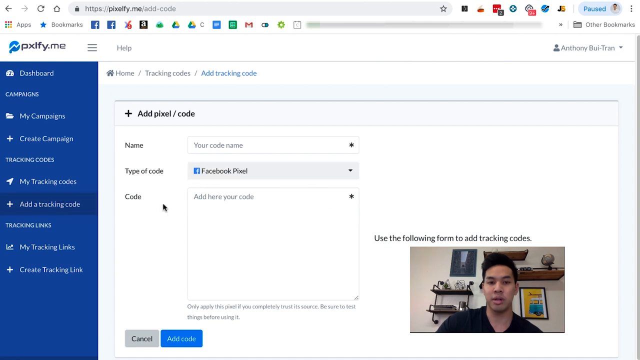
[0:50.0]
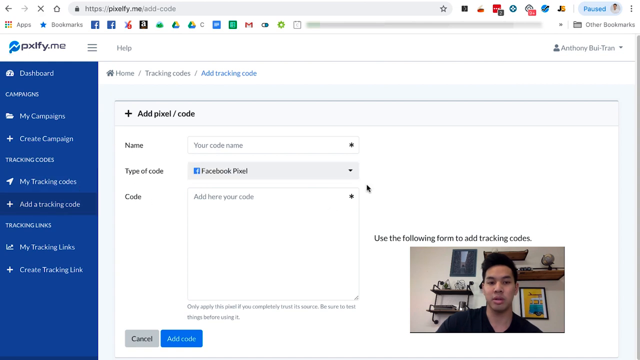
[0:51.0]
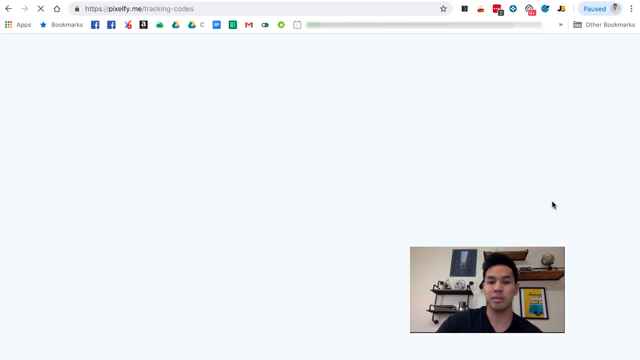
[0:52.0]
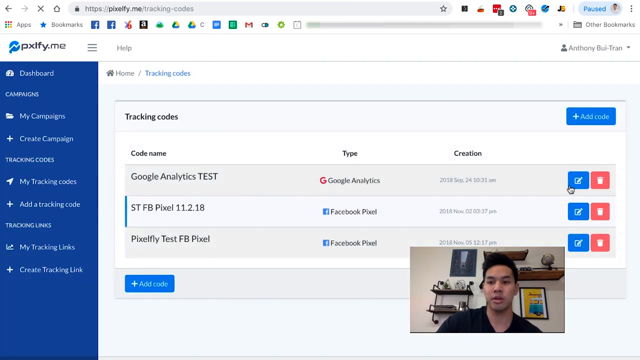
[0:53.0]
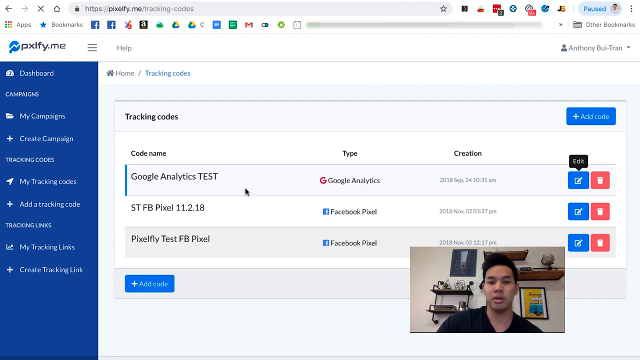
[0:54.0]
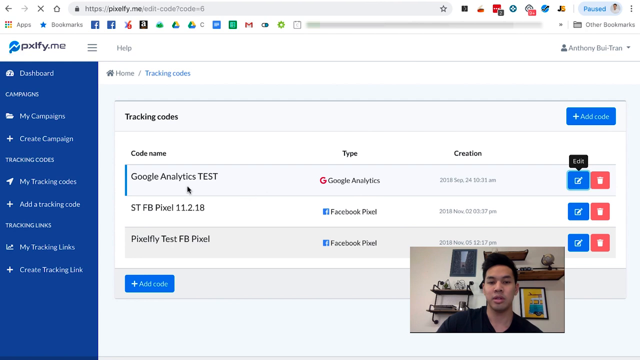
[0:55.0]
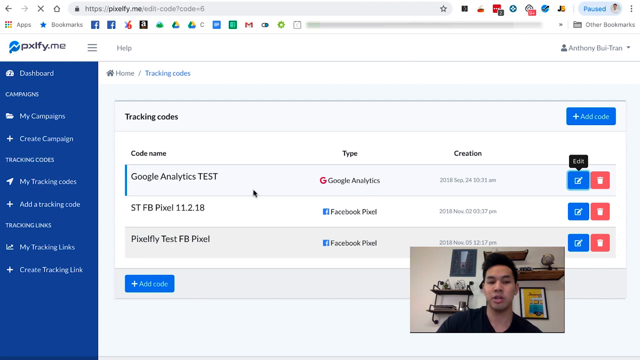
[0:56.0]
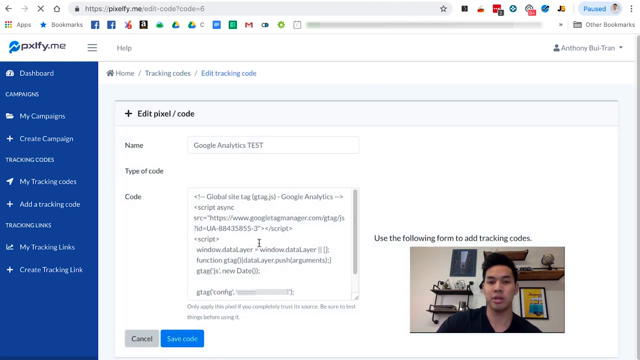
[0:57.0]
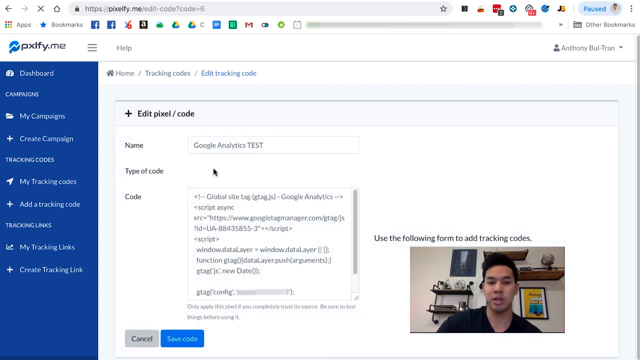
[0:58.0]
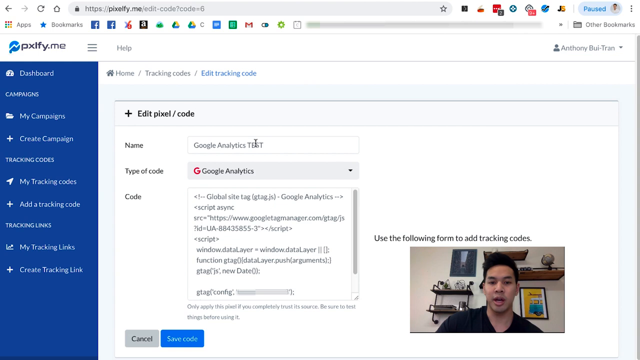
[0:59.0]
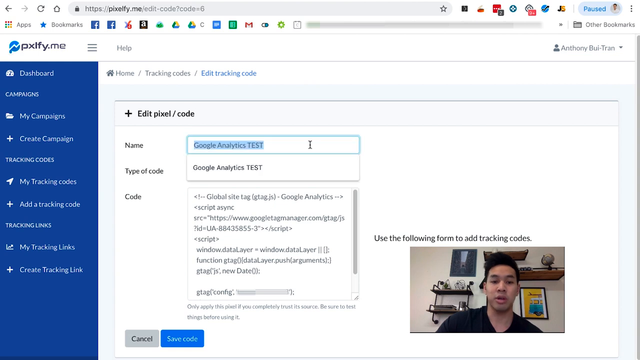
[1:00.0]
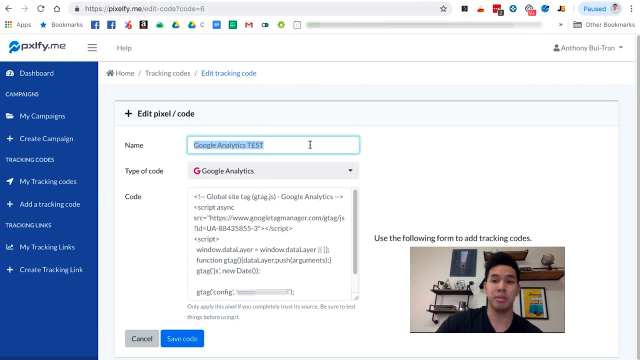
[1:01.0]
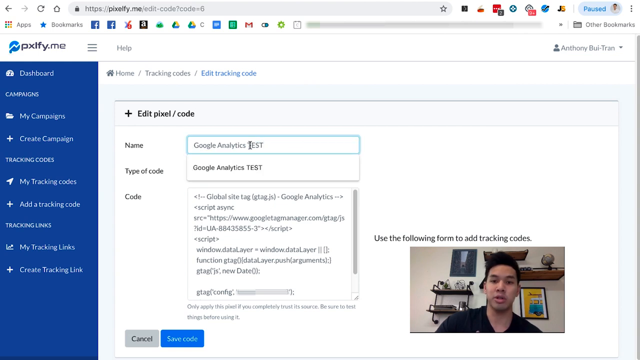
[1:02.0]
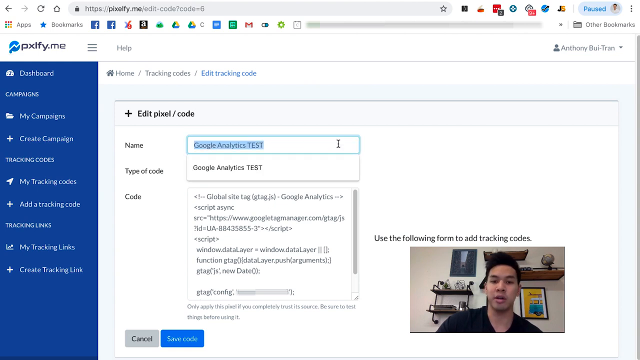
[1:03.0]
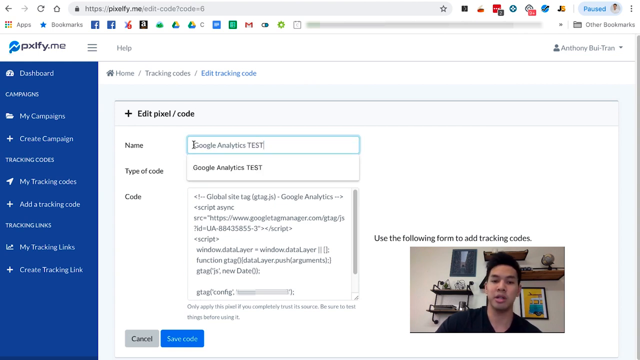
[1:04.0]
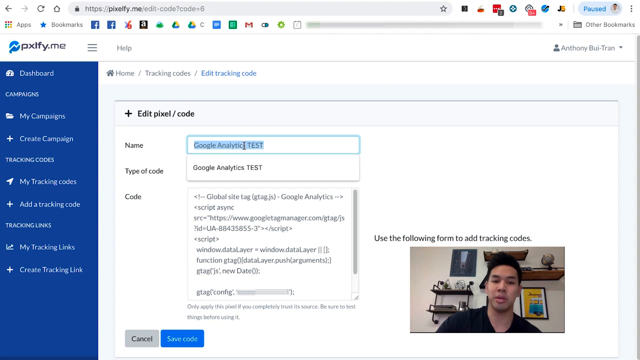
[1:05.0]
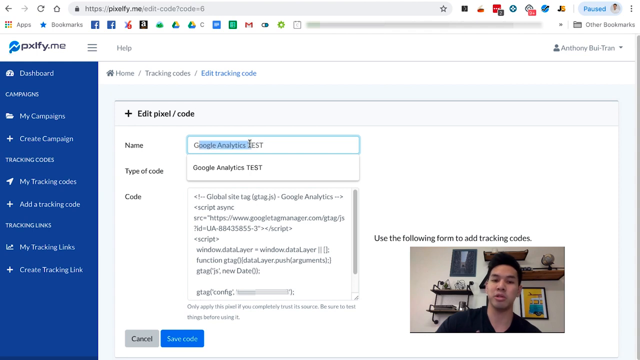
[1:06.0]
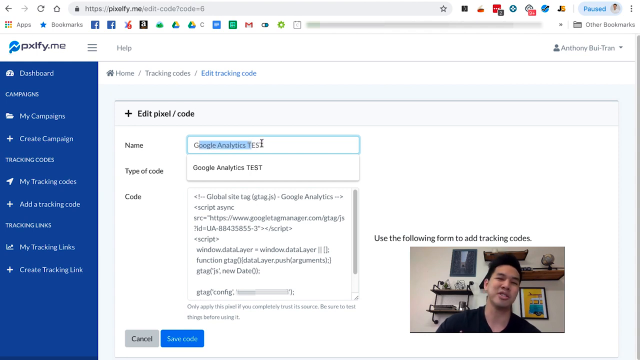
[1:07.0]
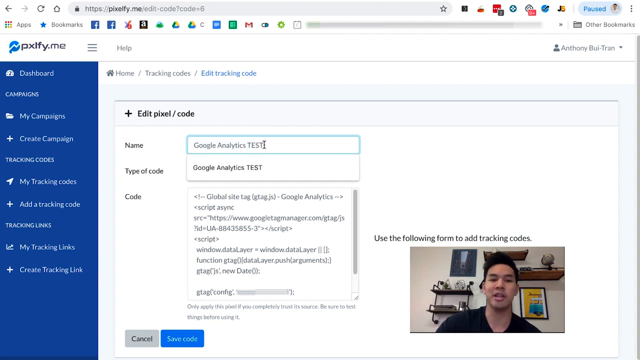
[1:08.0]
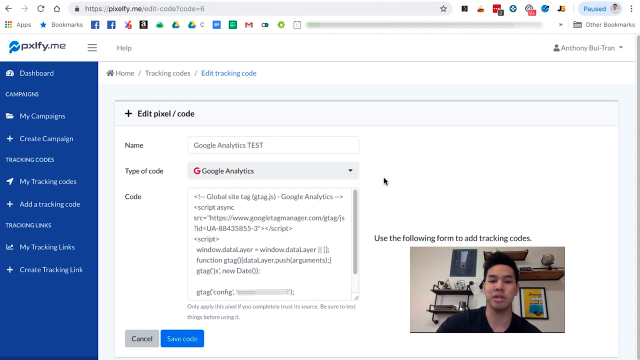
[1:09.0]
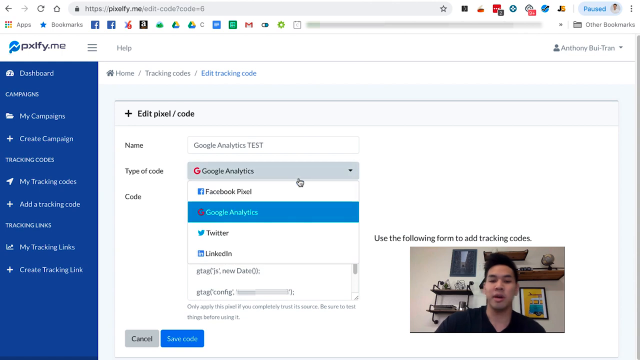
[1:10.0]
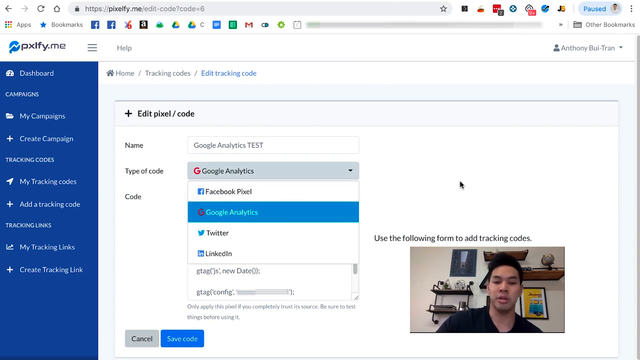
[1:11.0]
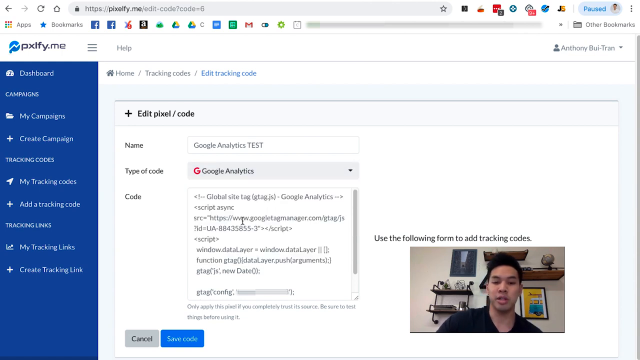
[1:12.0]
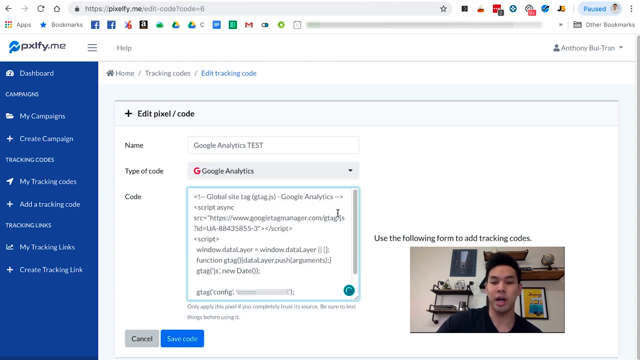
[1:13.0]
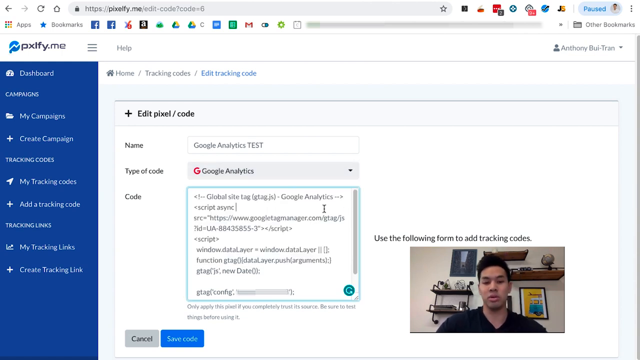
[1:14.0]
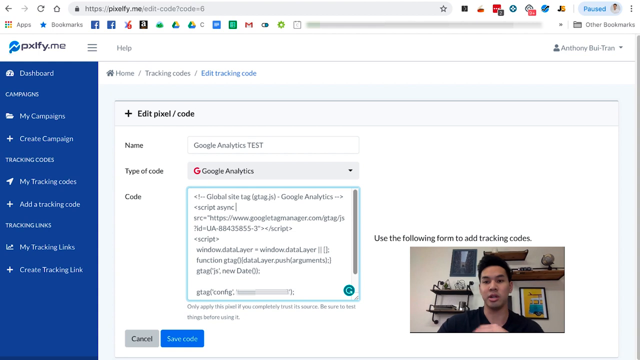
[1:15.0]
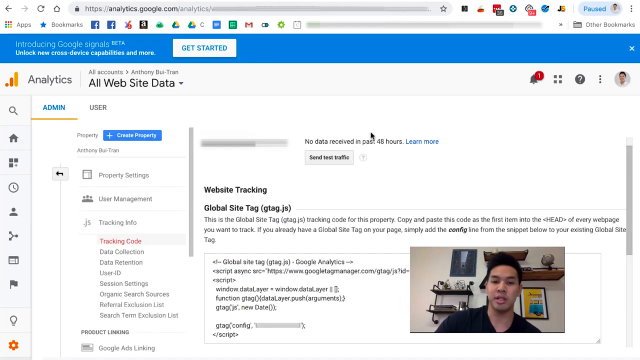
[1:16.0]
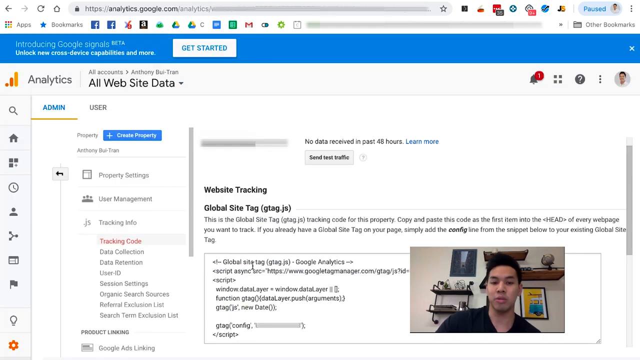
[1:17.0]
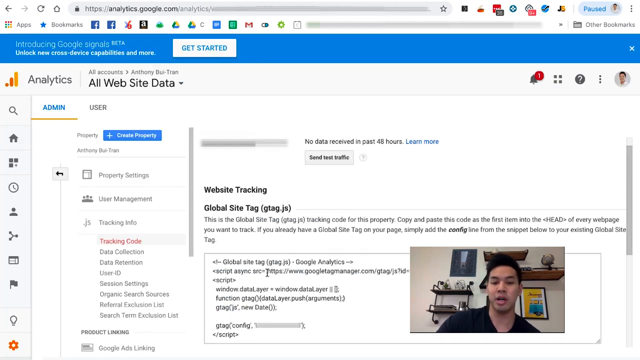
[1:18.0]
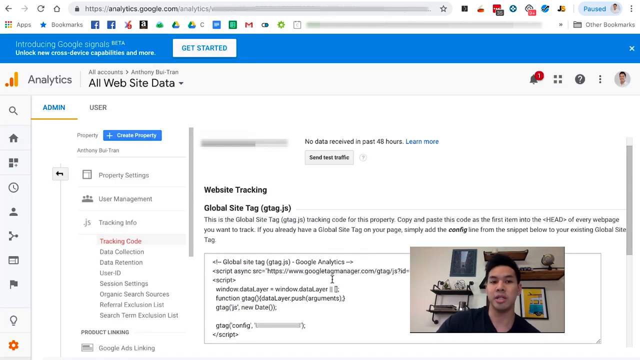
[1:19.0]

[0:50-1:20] A web browser is on pixelphi.me/add-code, on a pixel/code page with a drop-down menu for type of code, where the user has selected Facebook Pixel. In the bottom right of the screen, a video shows a man with black hair in a black shirt, sitting in front of very small shelves and talking into the screen. The window then changes to another page on the pixelphi.me website for tracking codes, where the mouse highlights an entry for the Google Analytics test tracking code and hovers over a blue edit button. The mouse moves around, and an edit pixel code window appears. The name is Google Analytics test, the type of code is Google Analytics, and below that is the JavaScript snippet for Google Analytics. The mouse highlights the title Google Analytics test, then opens the type of code menu showing the drop-down options, and closes it. The tab is then switched back to the Google Analytics website, where the original JavaScript website tracking code is highlighted.